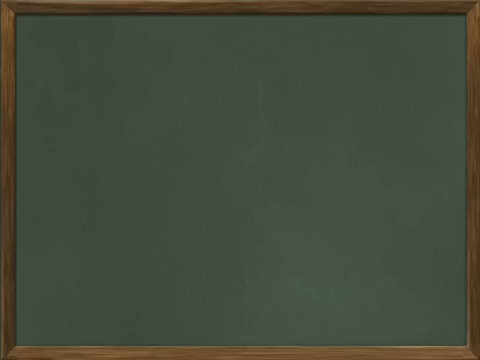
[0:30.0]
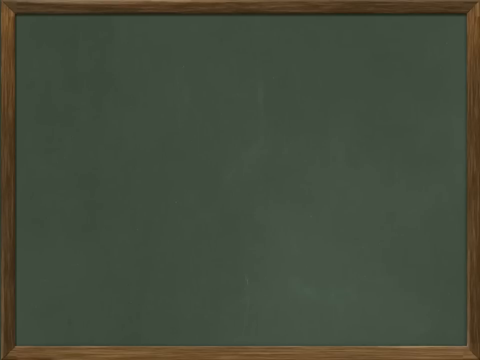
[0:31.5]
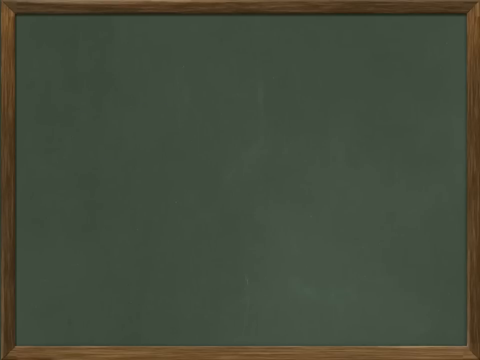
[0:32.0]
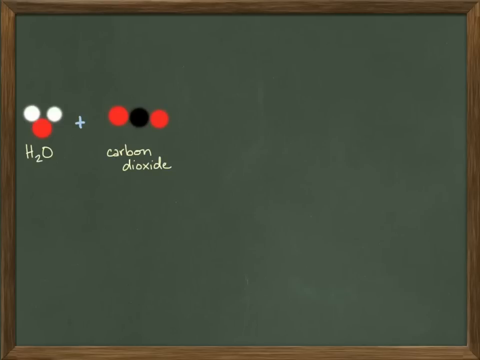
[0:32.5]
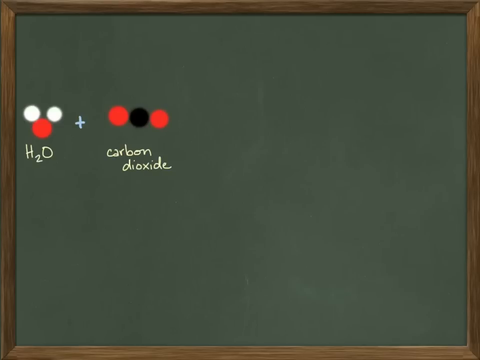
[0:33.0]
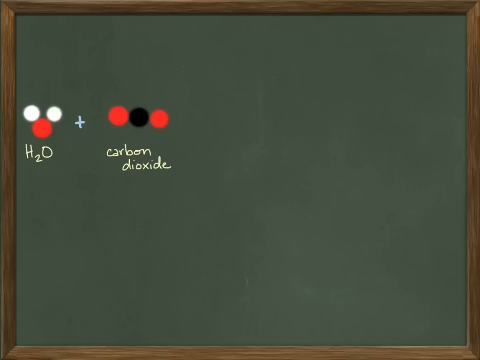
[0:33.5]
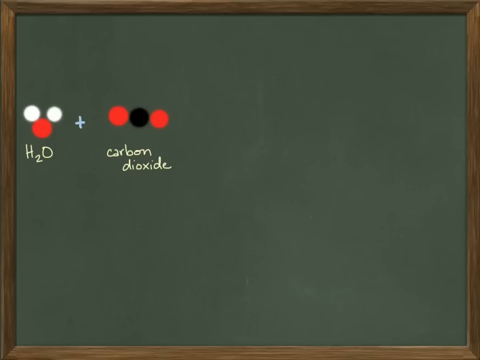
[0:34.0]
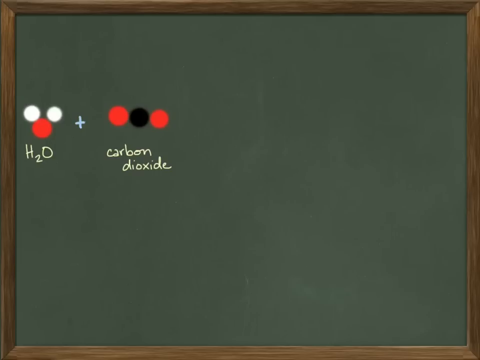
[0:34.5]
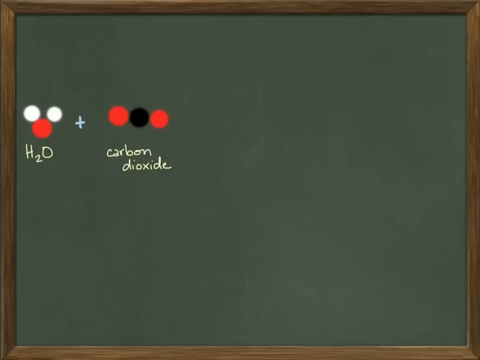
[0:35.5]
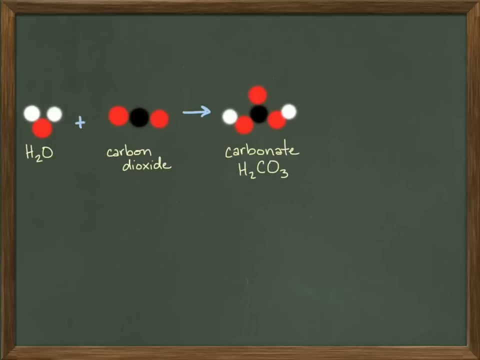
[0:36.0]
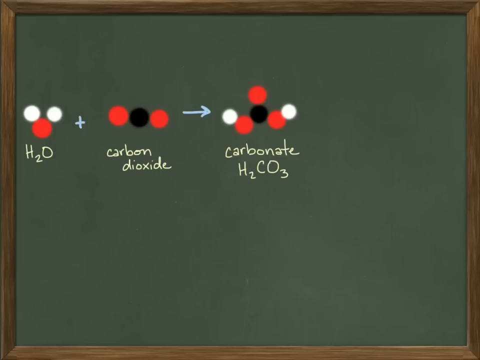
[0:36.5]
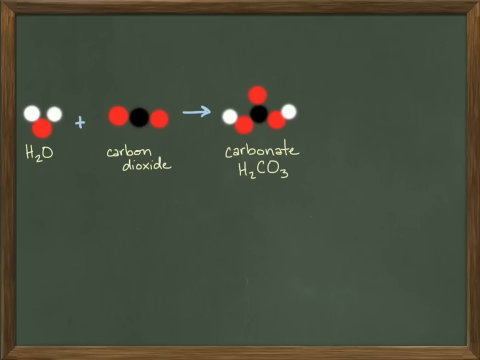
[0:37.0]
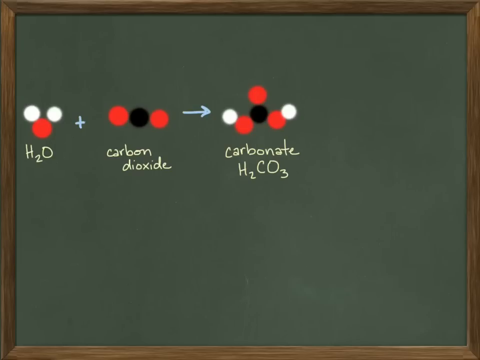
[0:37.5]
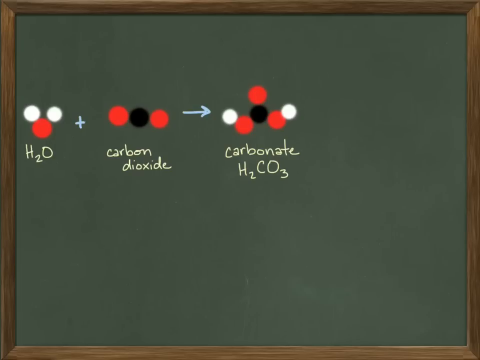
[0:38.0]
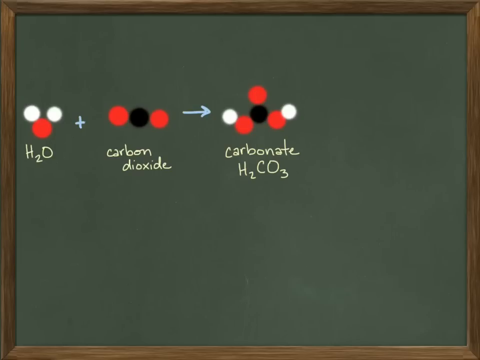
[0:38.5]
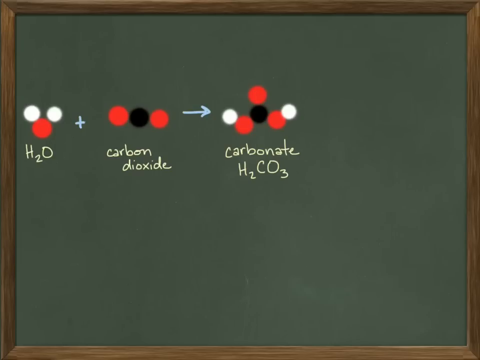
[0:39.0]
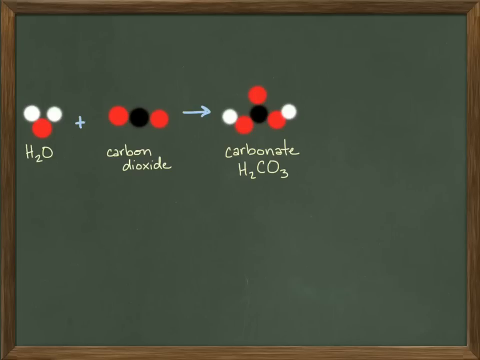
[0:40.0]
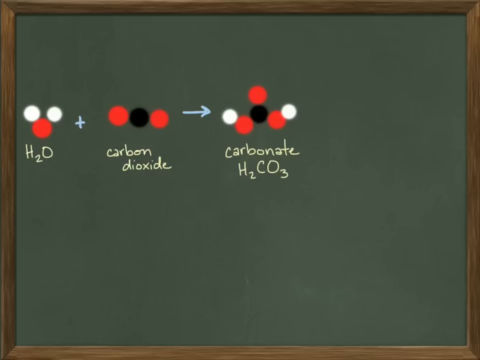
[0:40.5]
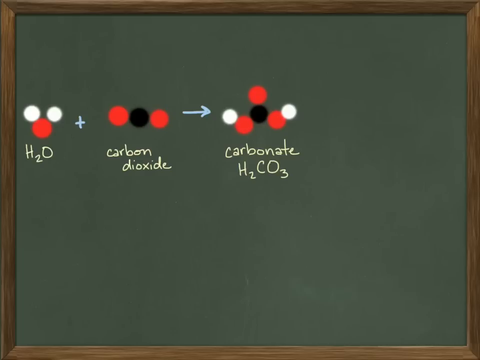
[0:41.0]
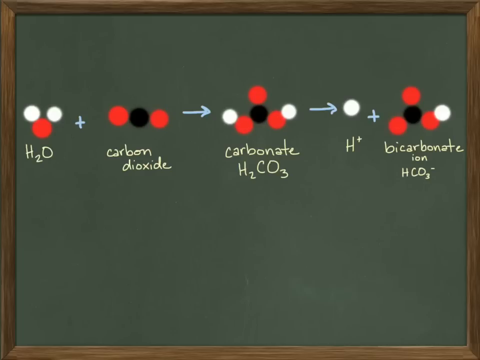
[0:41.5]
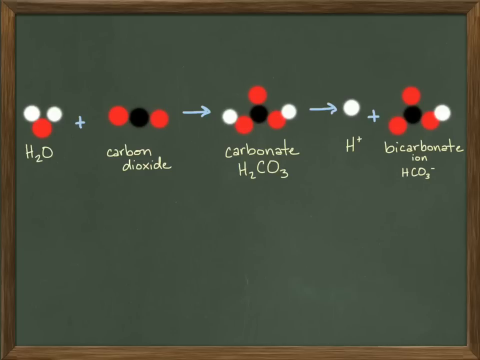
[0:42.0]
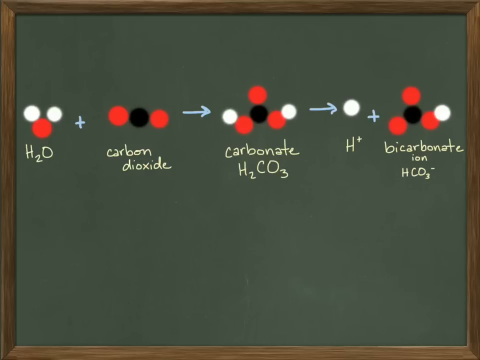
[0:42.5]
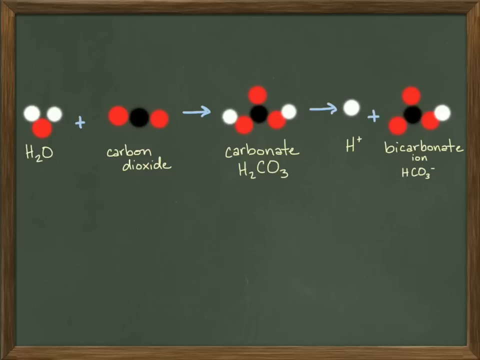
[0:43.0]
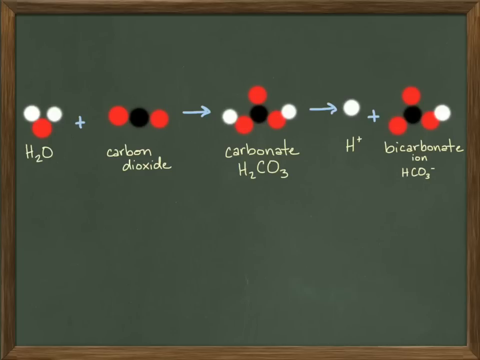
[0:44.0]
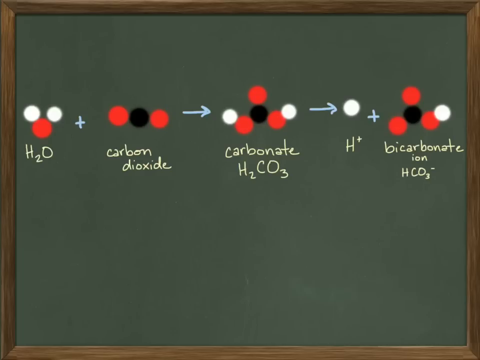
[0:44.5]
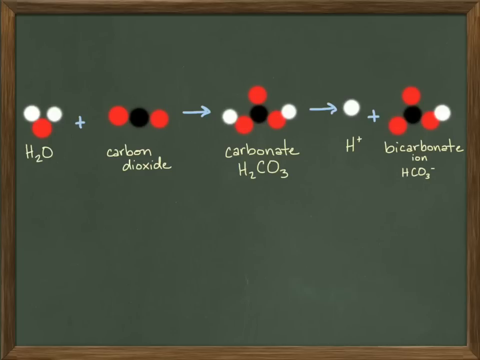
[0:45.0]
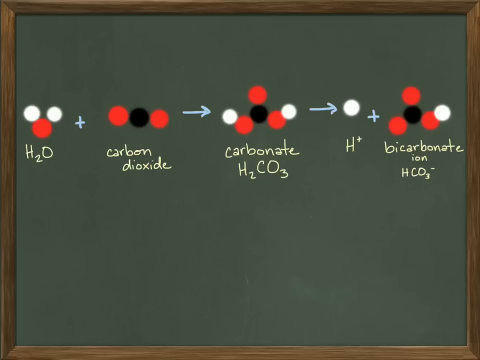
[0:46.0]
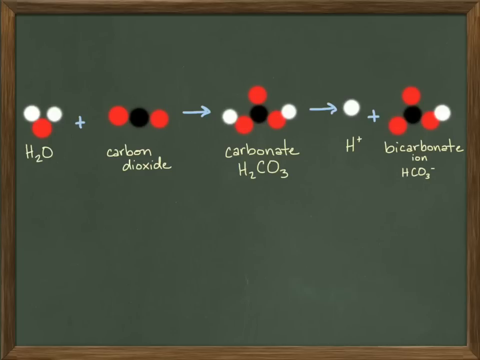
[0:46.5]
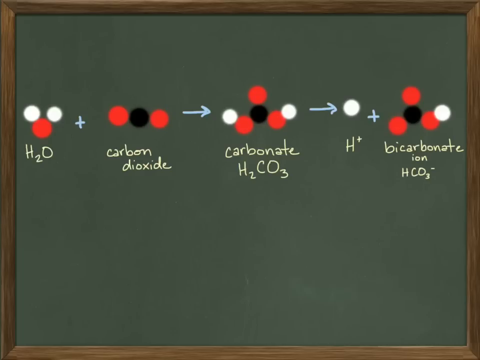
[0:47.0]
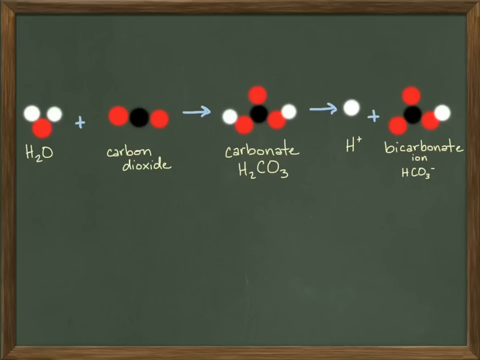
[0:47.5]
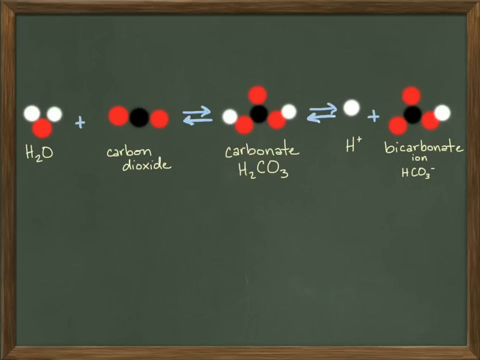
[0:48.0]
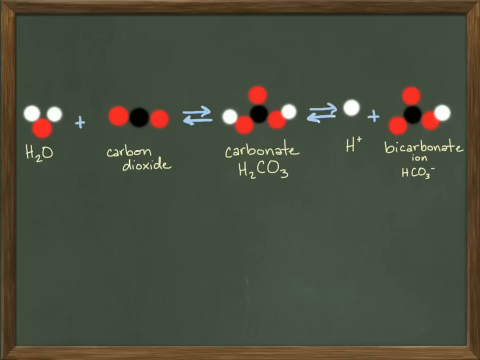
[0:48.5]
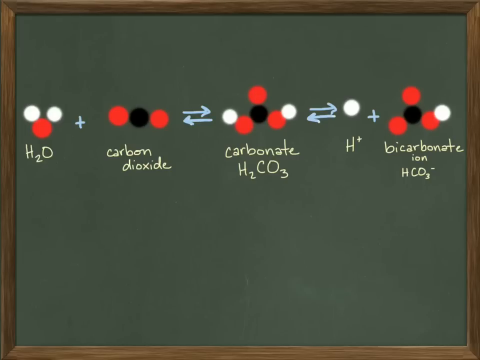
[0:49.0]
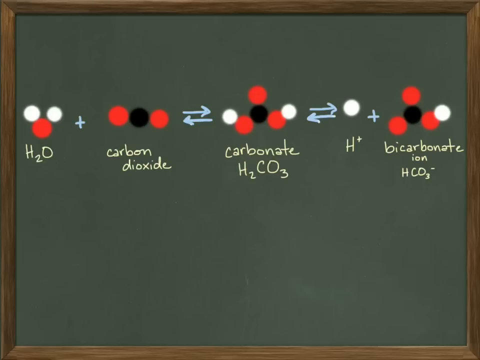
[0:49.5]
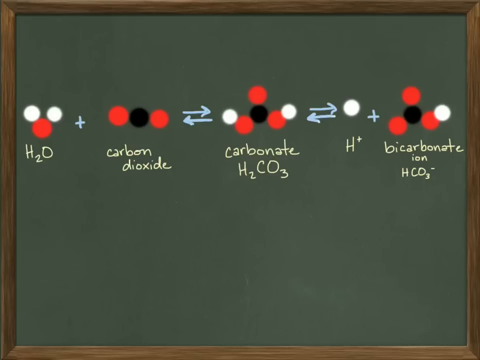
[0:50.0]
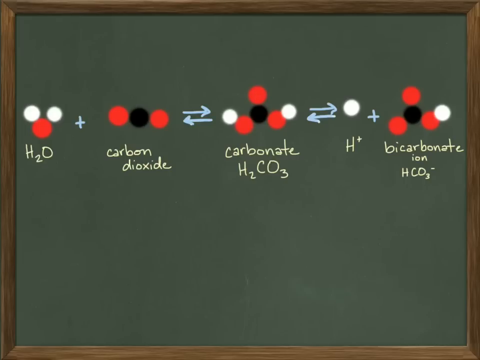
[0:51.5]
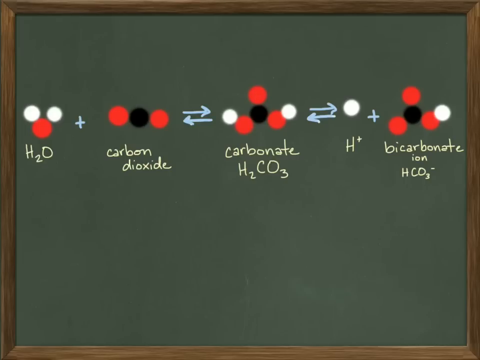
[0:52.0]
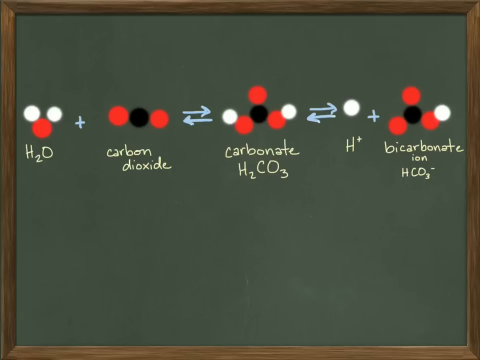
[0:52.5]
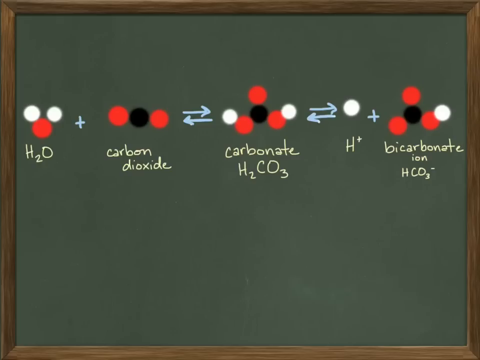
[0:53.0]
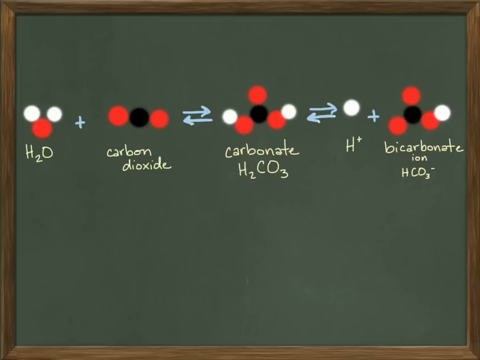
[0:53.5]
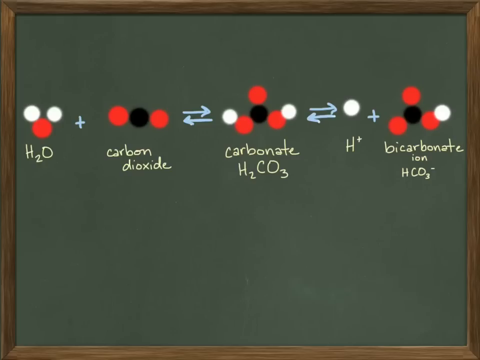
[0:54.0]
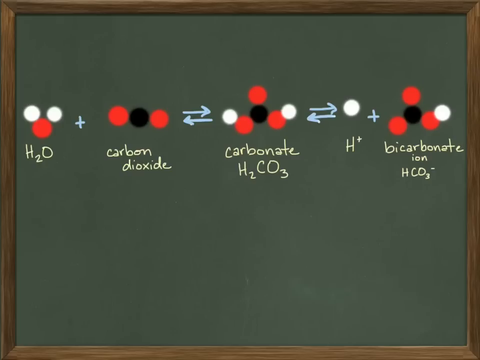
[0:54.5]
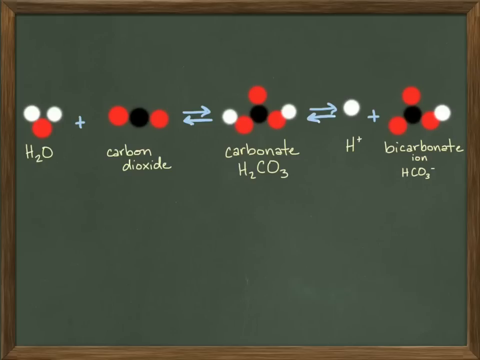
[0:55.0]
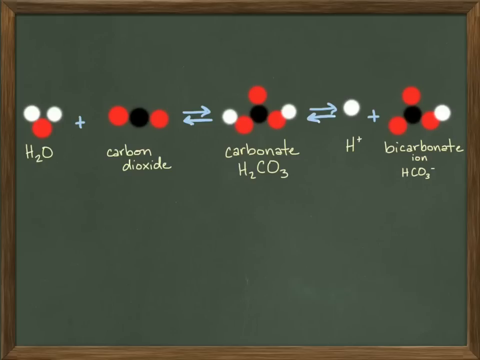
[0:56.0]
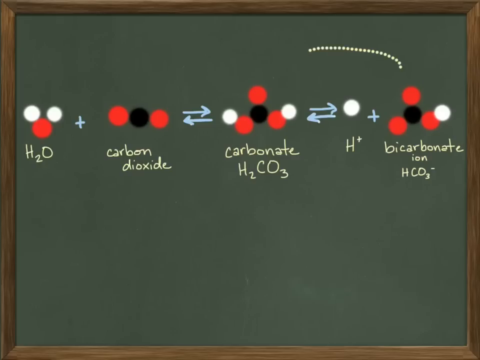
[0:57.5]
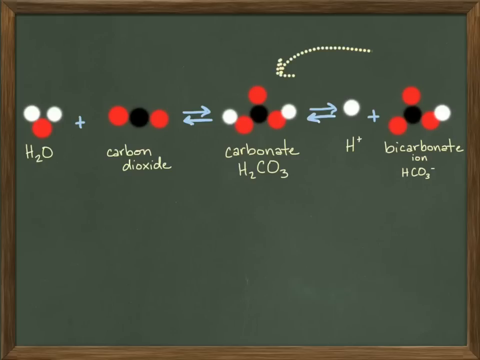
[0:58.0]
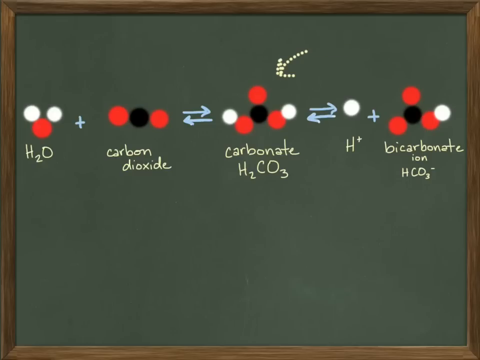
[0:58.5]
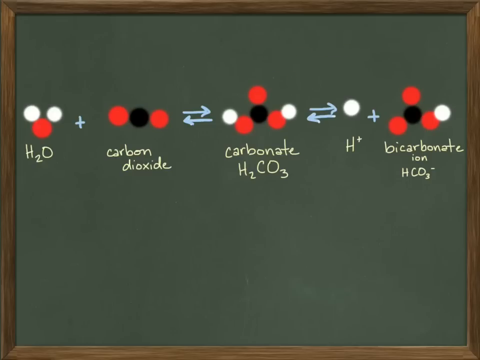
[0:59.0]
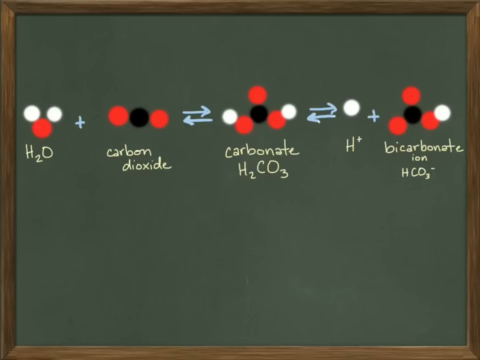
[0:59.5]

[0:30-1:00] The green chalkboard-like board appears to be on a computer screen. It is framed, and the frame is wood. Writing finally appears: "H2O" plus "carbon dioxide". There are two circles and one red circle, plus two circles and one black circle representing carbon dioxide. Next, an arrow points to "carbonate H2CO3", shown with six circles: three red, one black and two white. It looks a little hazy. The equation then continues to the right to "H+", shown as a white circle, plus "bicarbonate ion HCO3", represented by three red circles, one black circle and one white circle. The equation takes up a lot of the chalkboard.